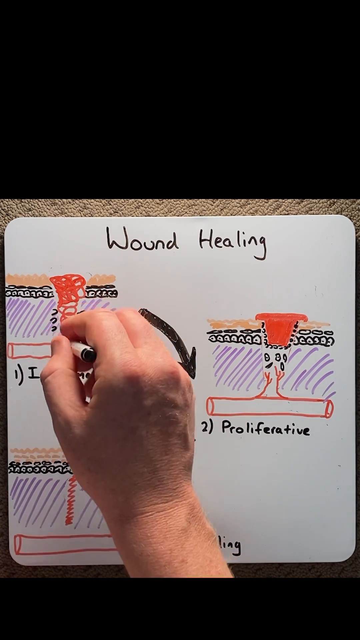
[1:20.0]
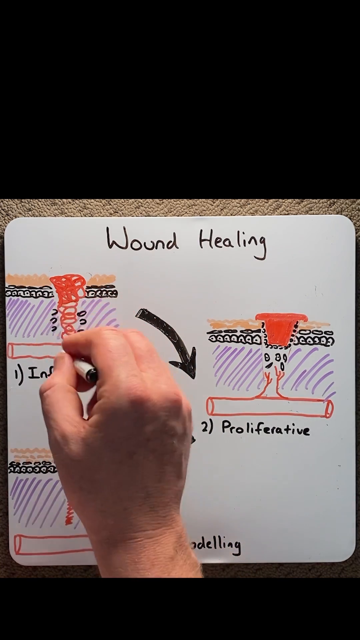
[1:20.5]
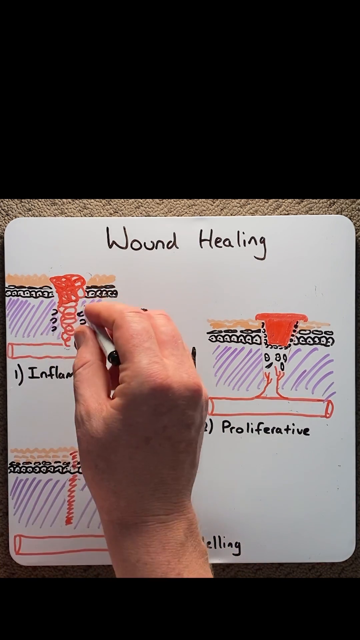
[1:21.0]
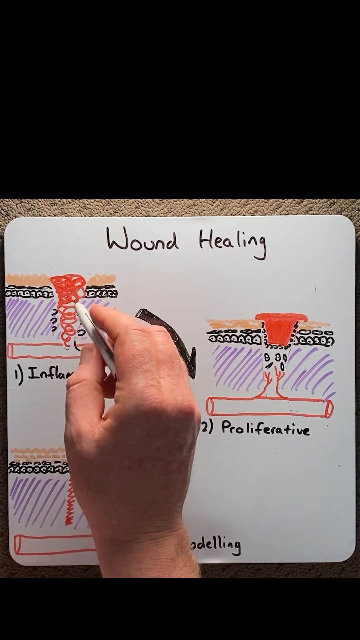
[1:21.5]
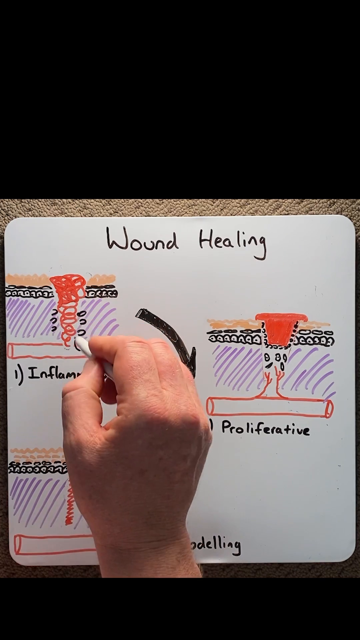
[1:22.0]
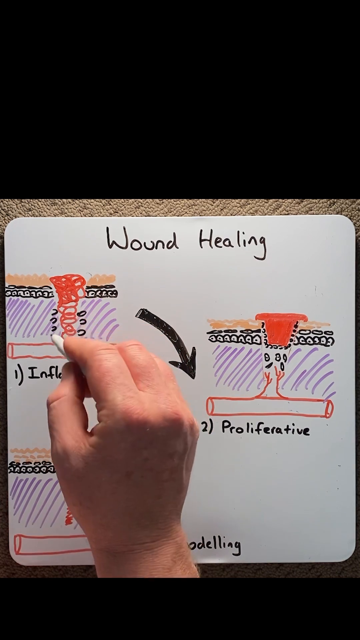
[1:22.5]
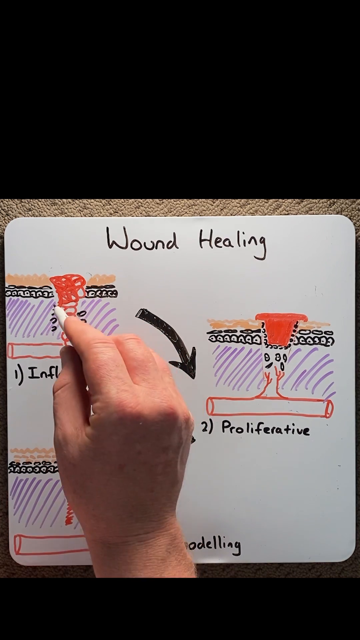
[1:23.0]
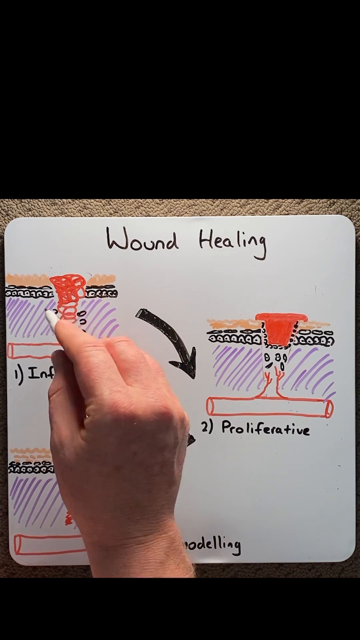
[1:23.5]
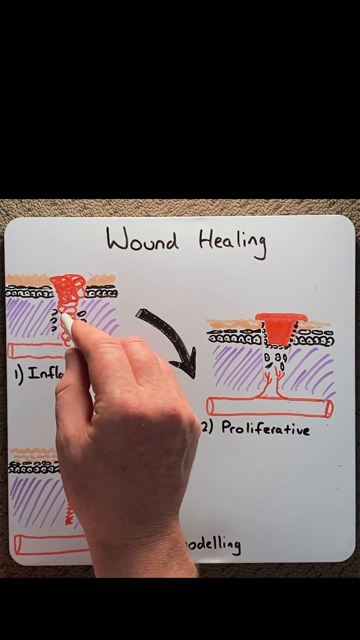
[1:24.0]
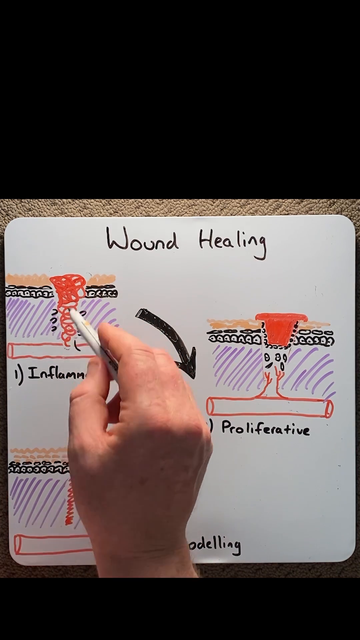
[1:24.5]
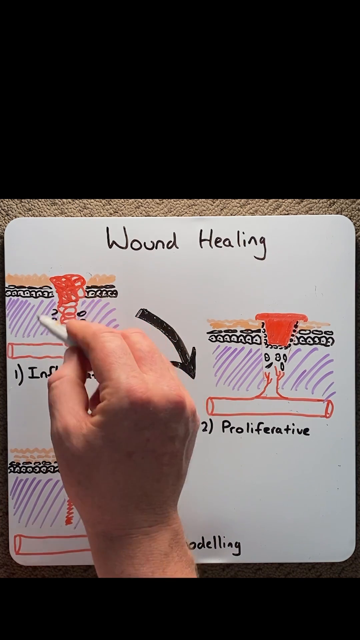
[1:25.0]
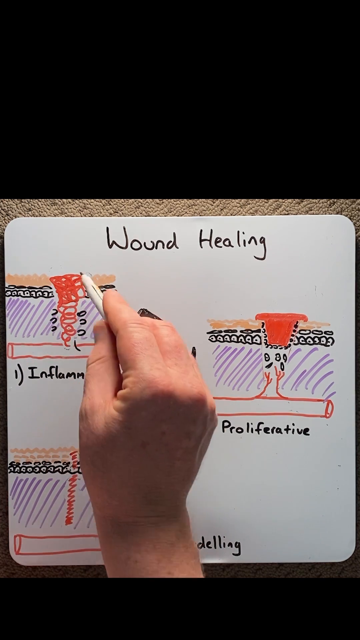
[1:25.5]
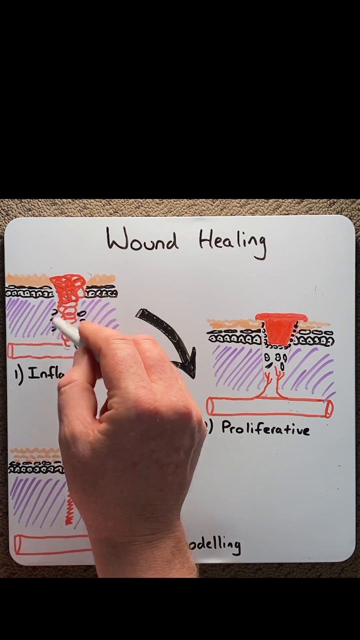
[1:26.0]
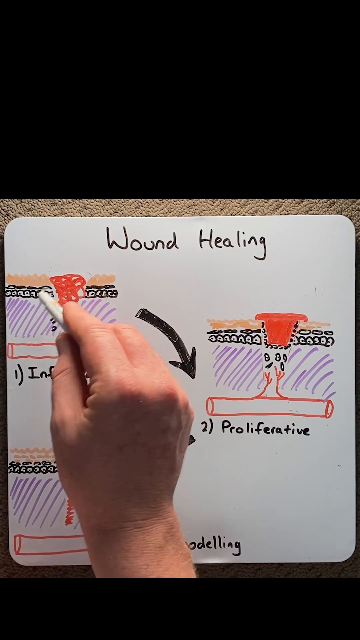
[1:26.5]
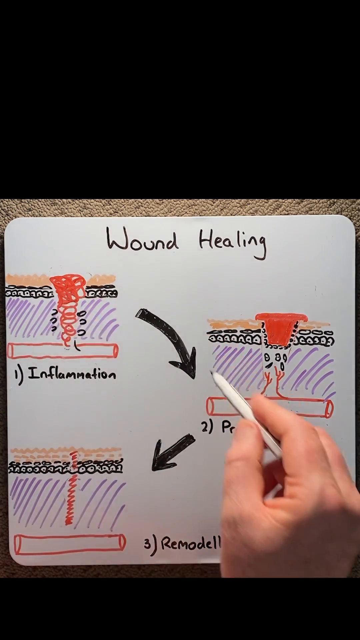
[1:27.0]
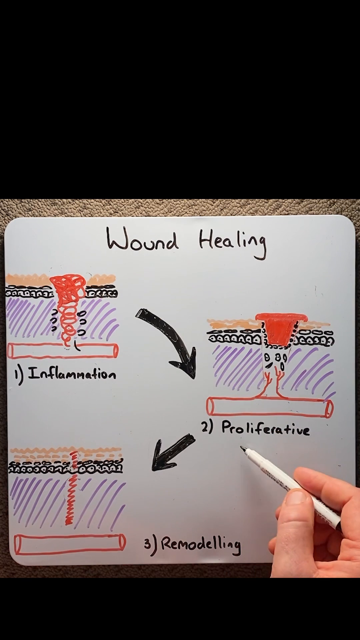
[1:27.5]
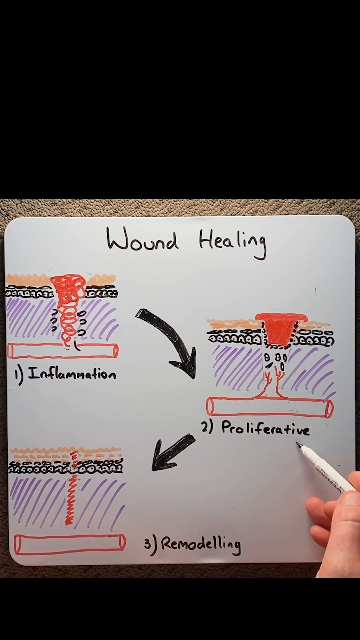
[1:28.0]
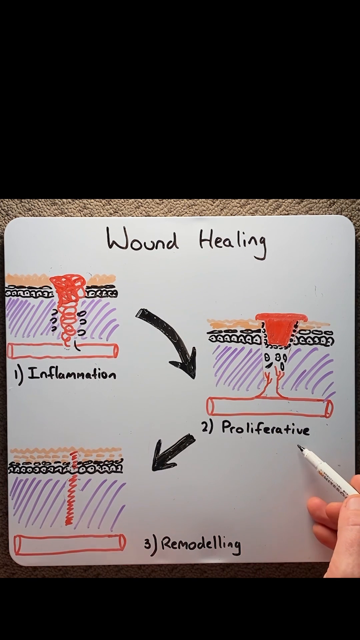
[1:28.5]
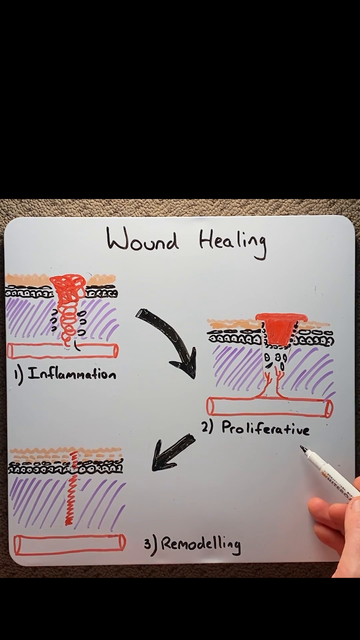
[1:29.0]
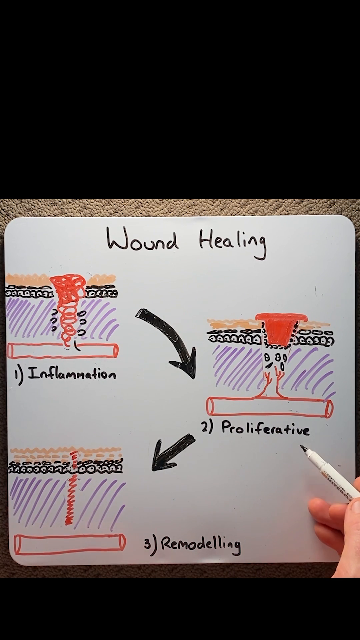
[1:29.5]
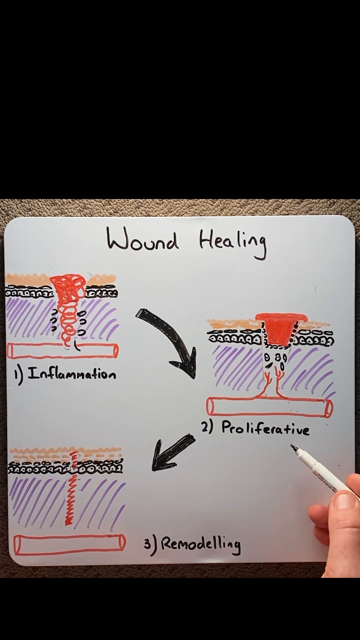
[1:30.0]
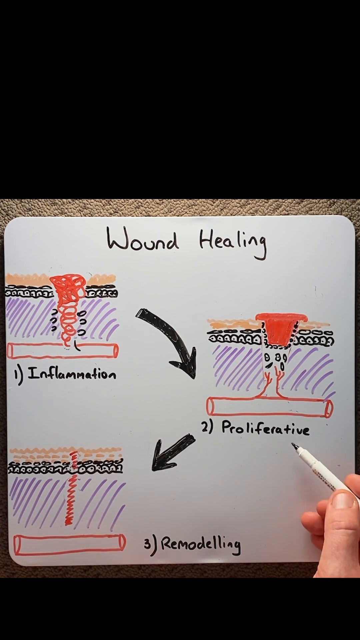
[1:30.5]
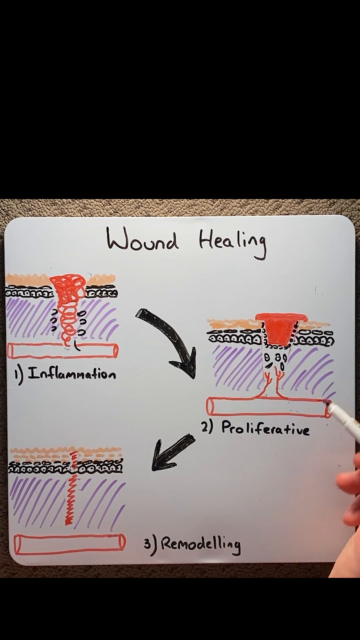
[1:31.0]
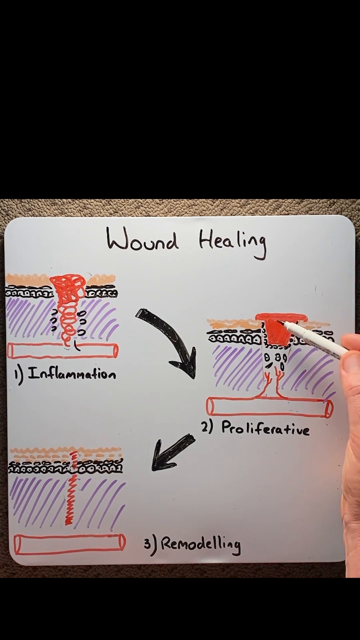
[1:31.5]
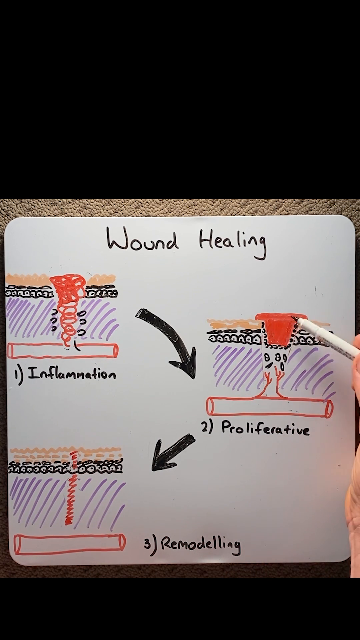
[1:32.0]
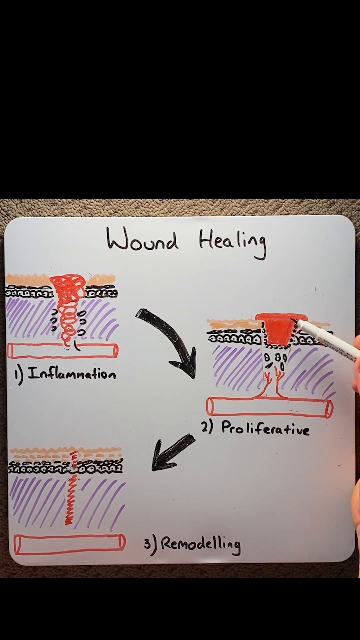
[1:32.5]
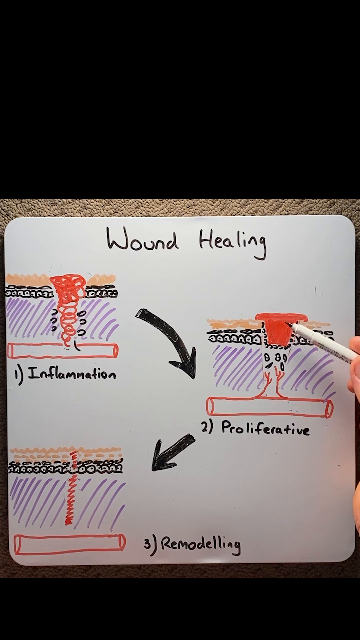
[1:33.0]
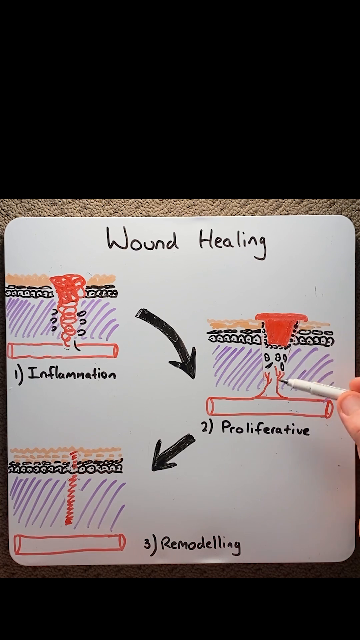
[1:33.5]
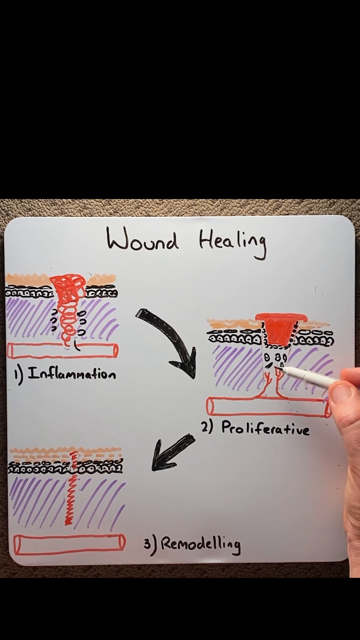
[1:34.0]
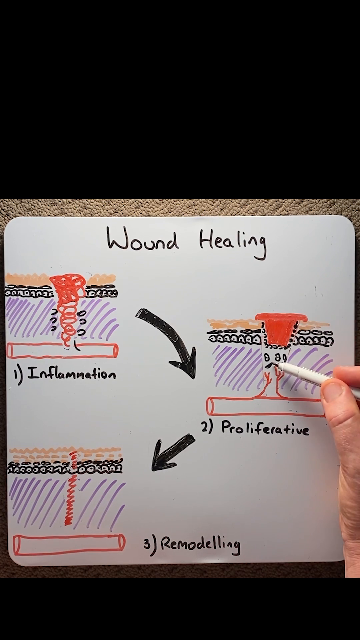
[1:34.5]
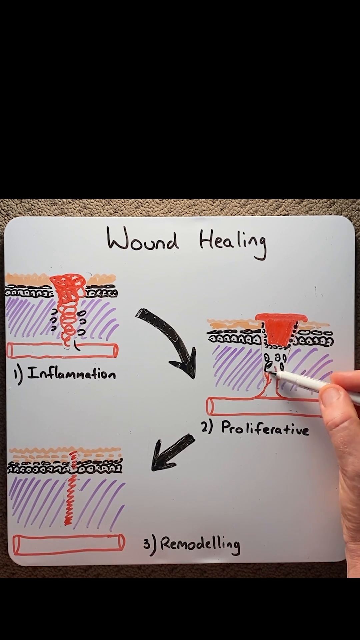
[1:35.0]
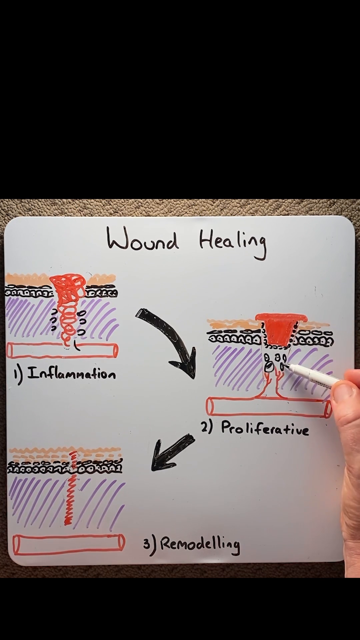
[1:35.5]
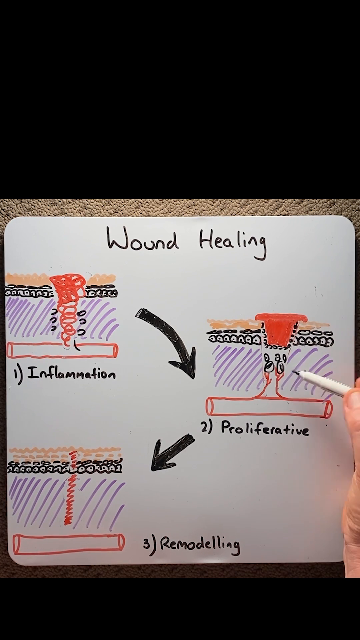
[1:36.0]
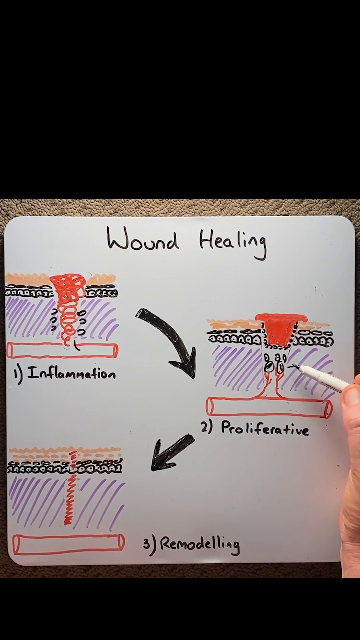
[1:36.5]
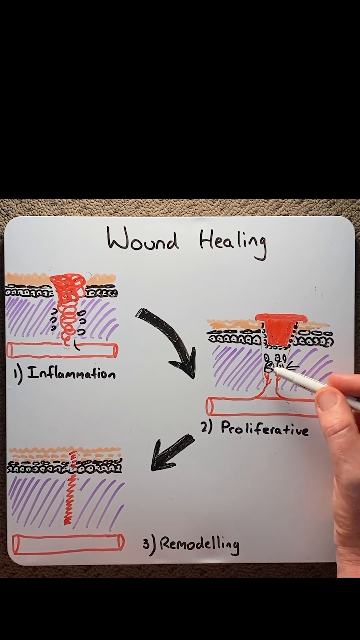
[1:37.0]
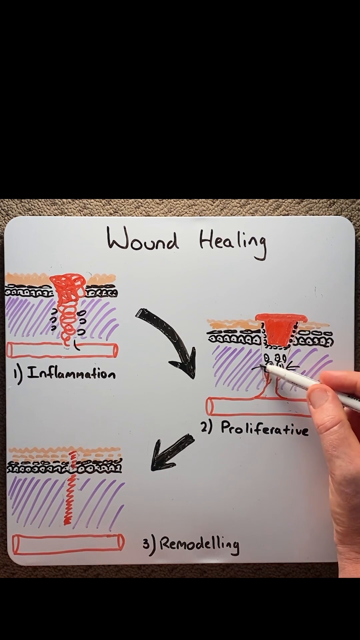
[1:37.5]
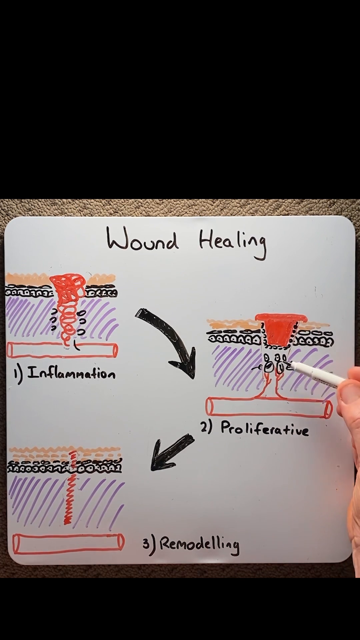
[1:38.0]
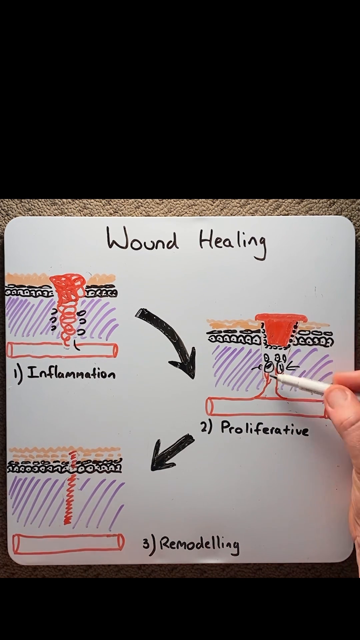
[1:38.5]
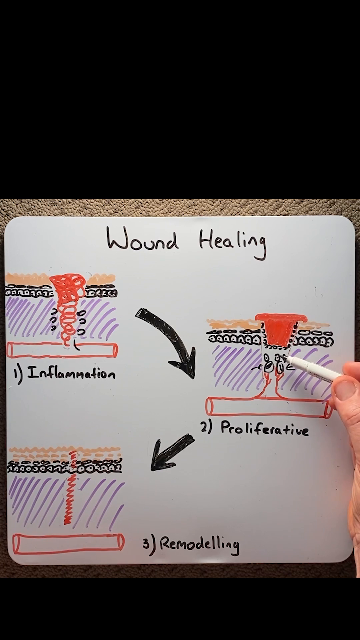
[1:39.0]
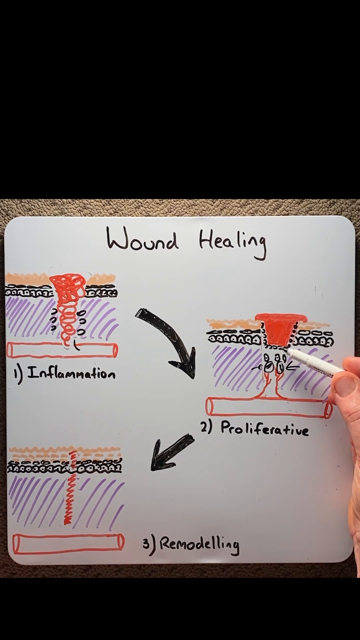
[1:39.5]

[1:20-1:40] The whiteboard explanation of wound healing shows three steps: inflammation, proliferative and remodeling. The first step has a drawing of a wound becoming inflamed with blood rising out of it. The second step, proliferative, has drawings showing how the wound kind of starts the healing process, and at this point the video is at the second stage. In a kind of point-of-view style, the man's face is not visible, only his hands drawing on the whiteboard and gesturing. The whiteboard is a rather small piece, with carpet behind it, so it looks like he is working on the floor. Judging by his hand, the man looks to be in his forties. The marker in his hand is black with an eraser at the end.